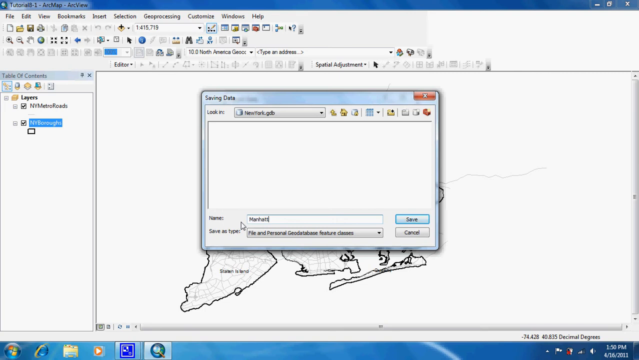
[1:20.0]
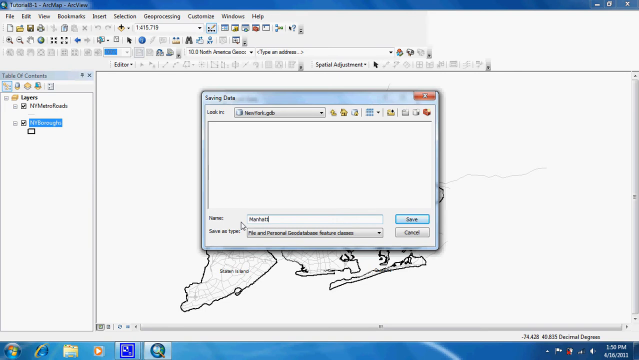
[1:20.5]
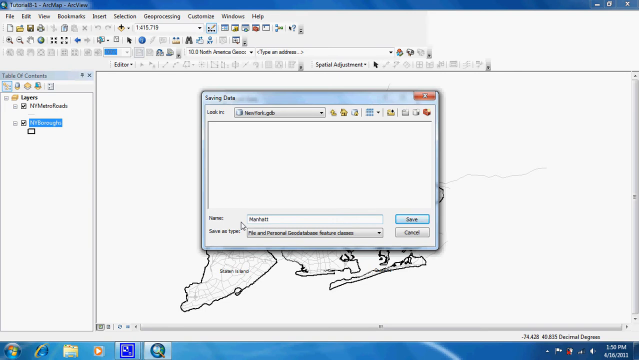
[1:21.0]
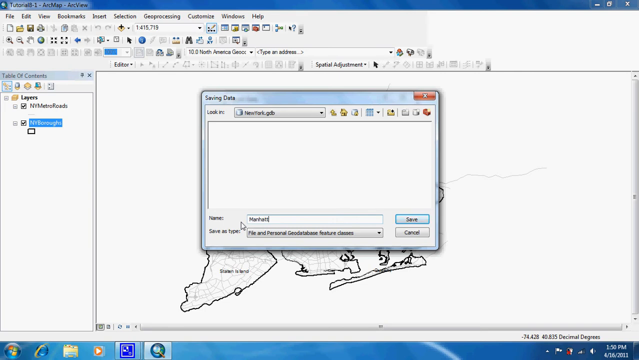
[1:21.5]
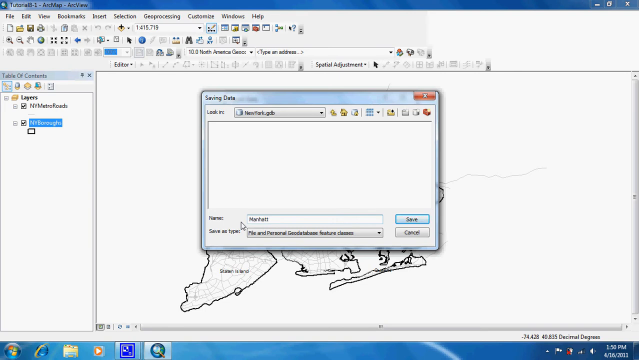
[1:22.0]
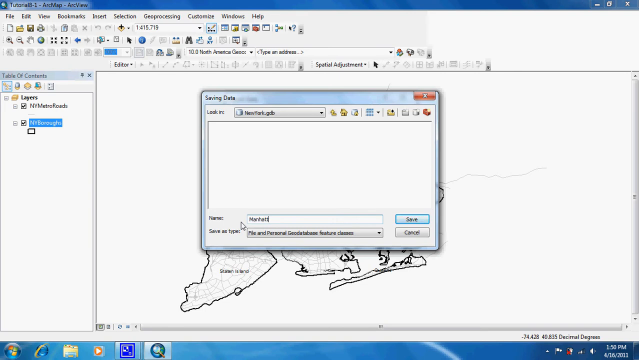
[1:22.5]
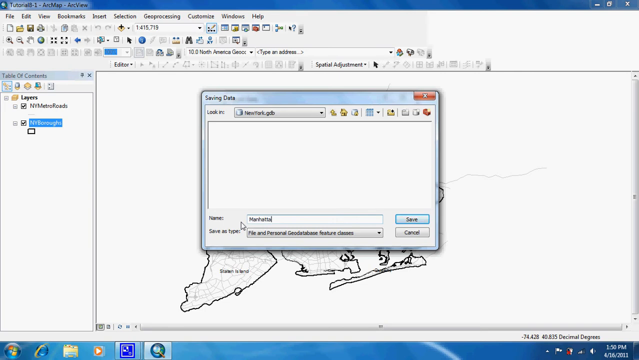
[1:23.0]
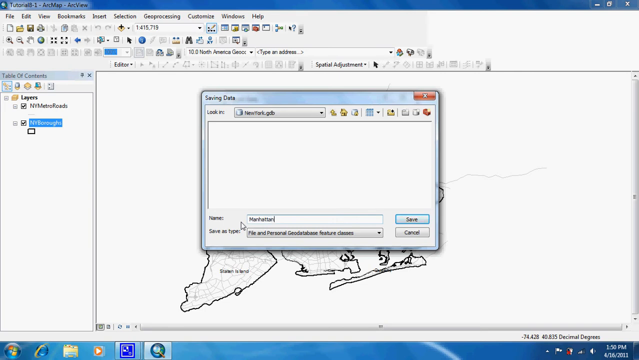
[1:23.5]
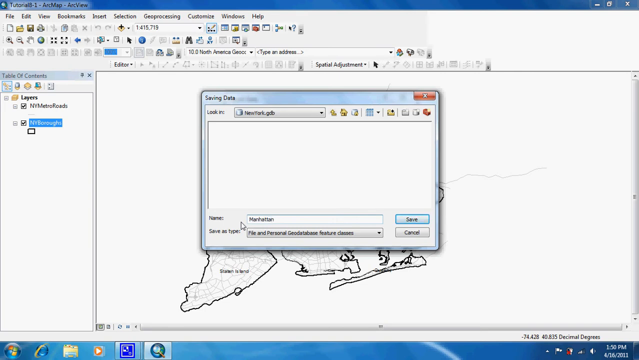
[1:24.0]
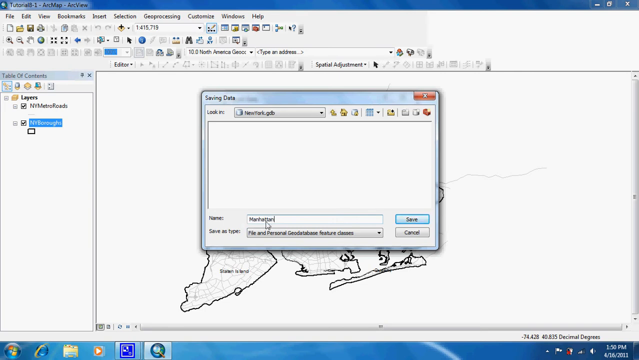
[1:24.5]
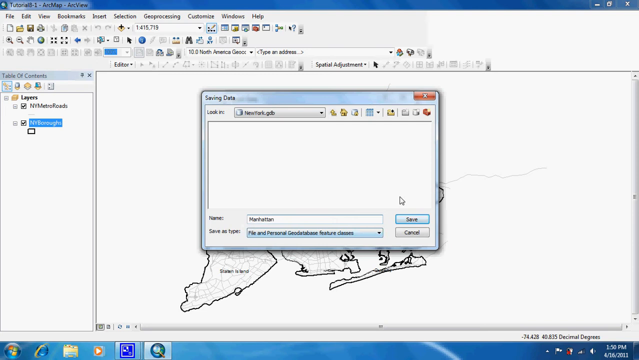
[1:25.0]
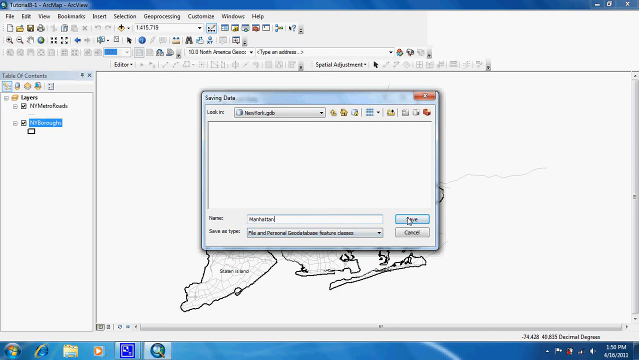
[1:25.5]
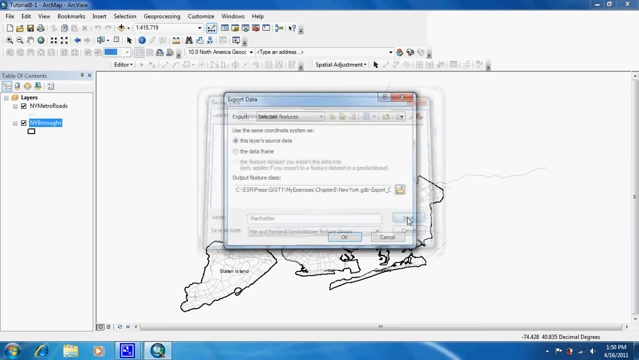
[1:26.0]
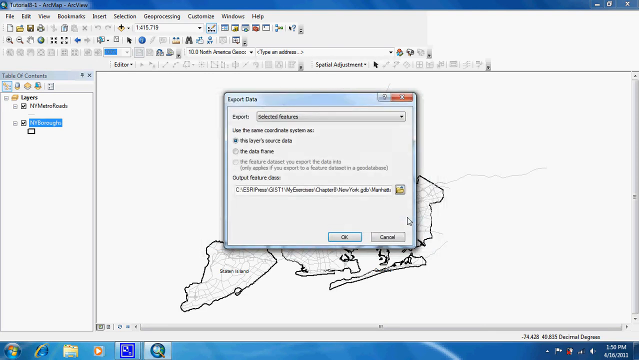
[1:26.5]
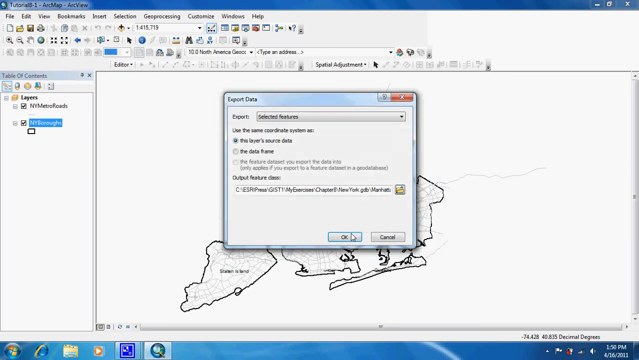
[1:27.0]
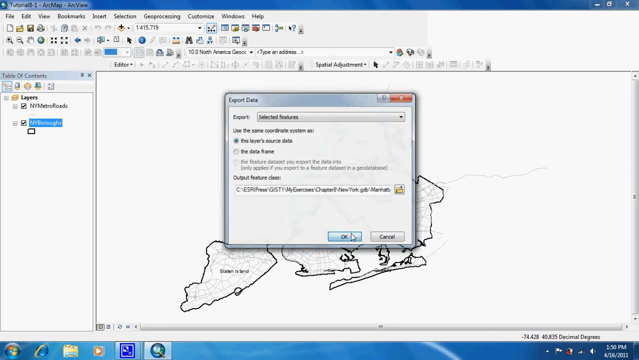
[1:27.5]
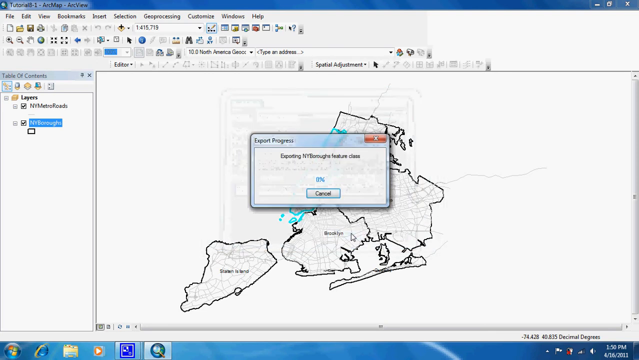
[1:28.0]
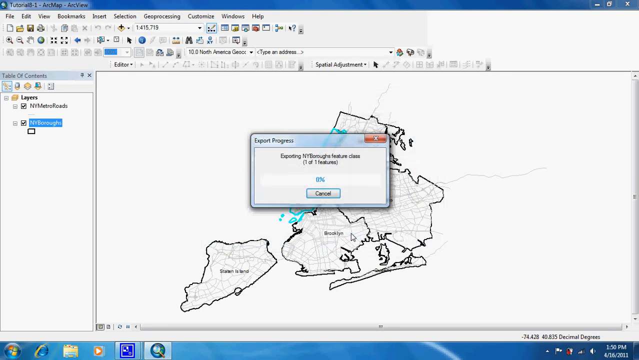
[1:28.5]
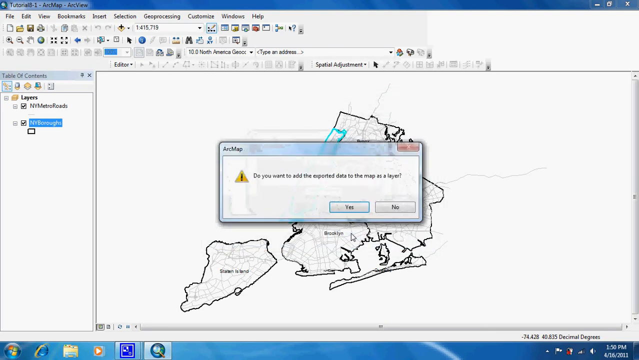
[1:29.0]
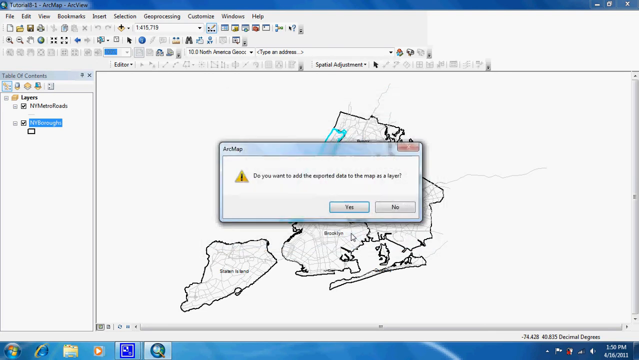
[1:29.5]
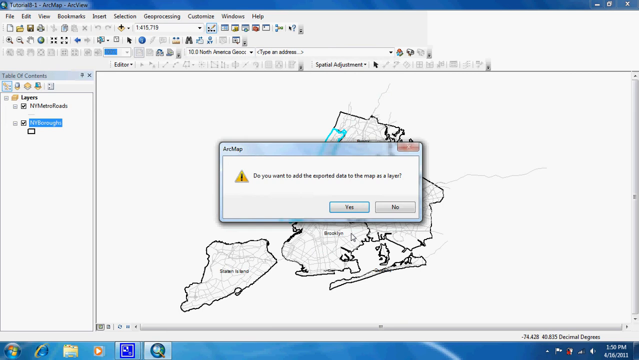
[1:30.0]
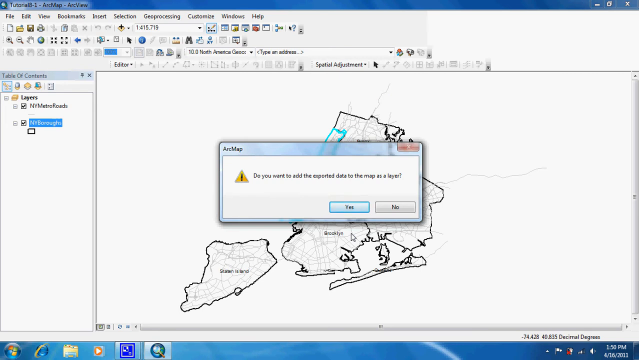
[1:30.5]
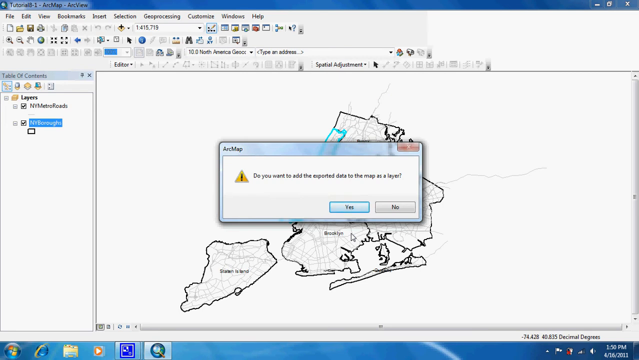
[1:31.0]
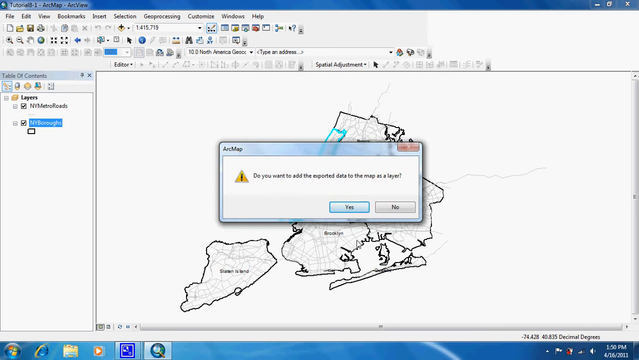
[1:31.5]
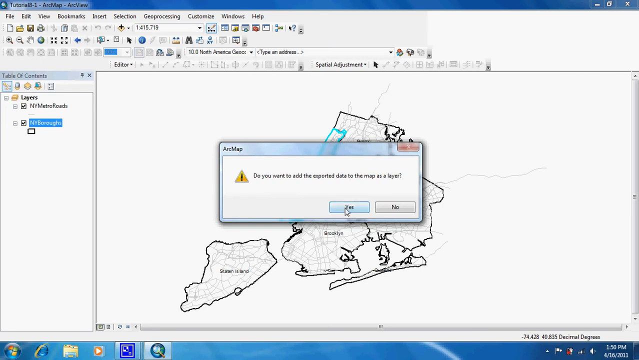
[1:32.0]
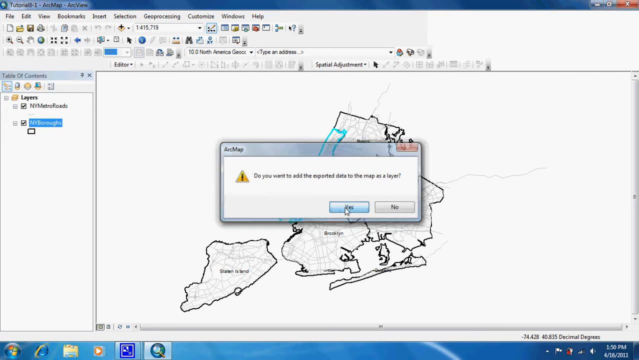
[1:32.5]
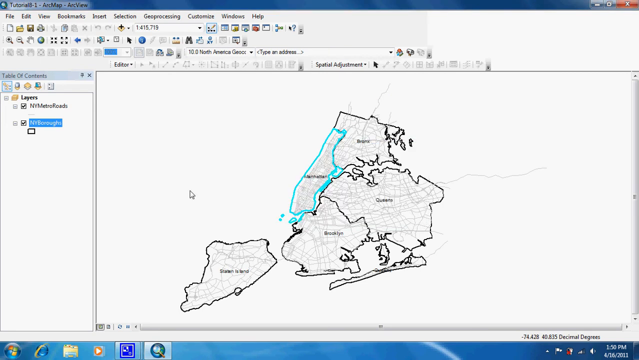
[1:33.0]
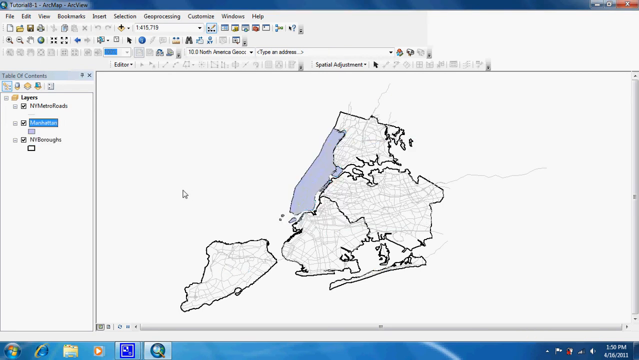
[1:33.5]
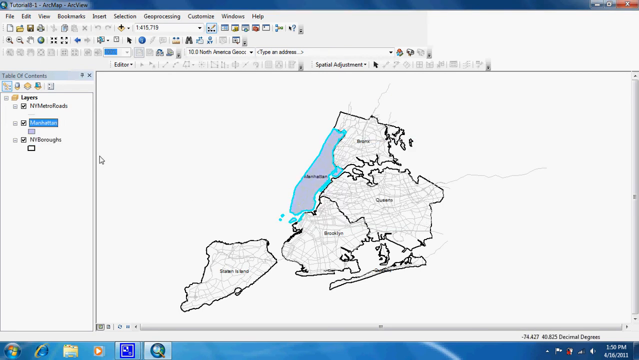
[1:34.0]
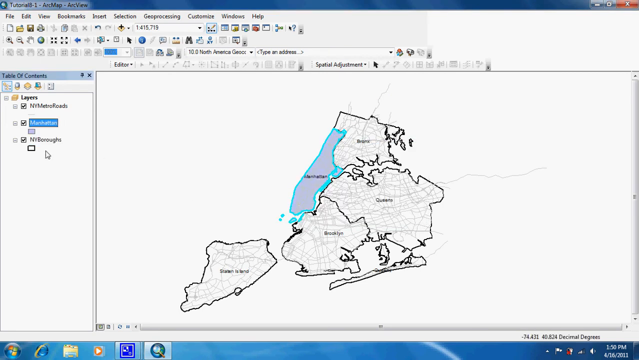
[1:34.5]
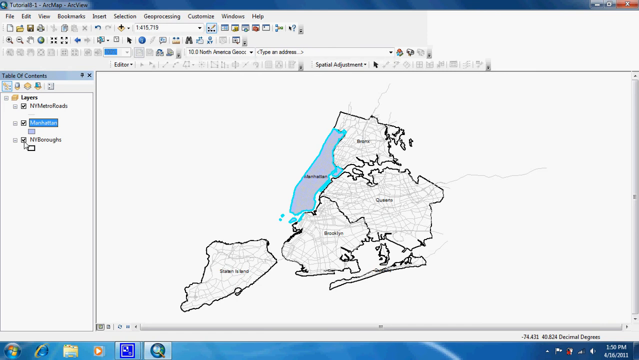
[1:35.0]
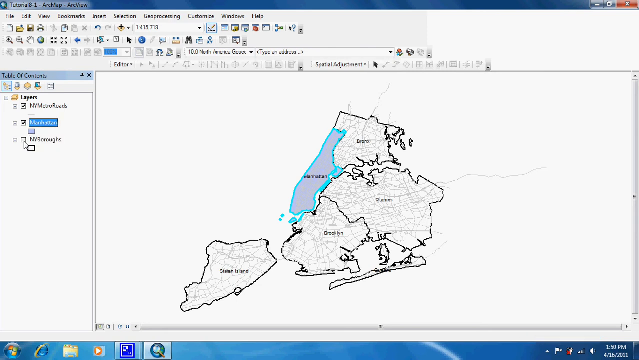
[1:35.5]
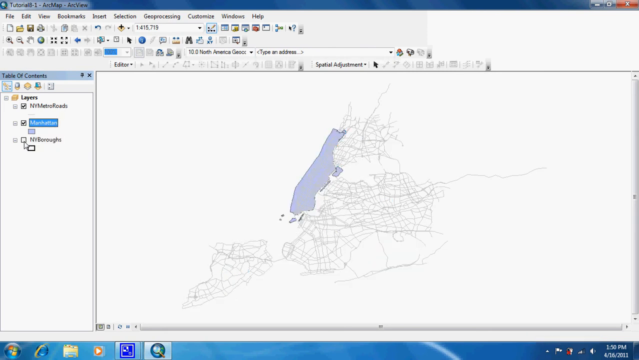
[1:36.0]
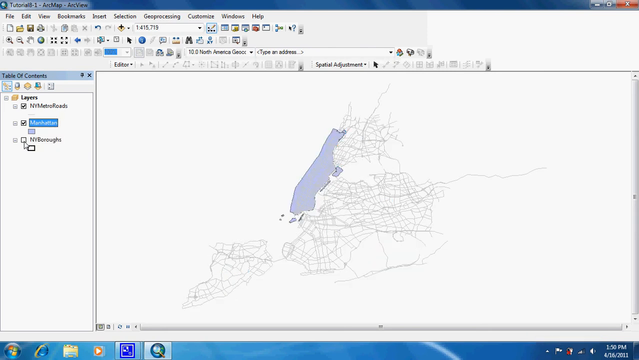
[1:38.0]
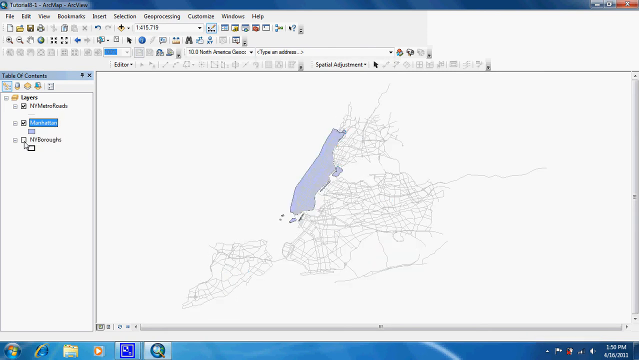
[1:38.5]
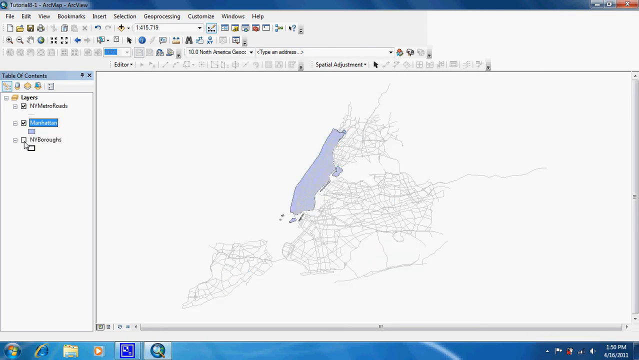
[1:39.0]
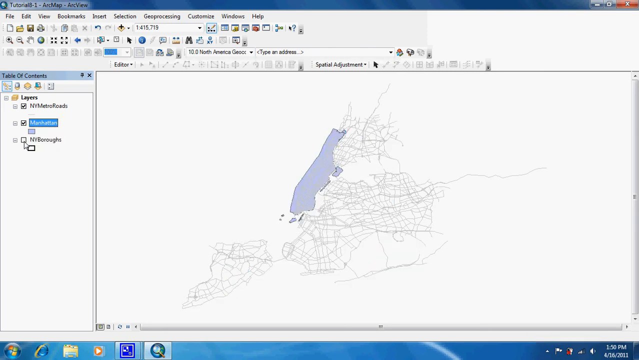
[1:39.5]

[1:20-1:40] The saving data window is open, looking in the newyork.gdb directory. The file is named Manhattan and the save button is clicked, returning to the export data window still open in the background. OK is clicked and the data exports. A pop-up asks "do you want to add the exported data to the map as a layer", and yes is selected. The map changes slightly: the teal highlight remains, but the Manhattan area itself has turned a purple-like color. At one point the view zooms out a little; the map looks slightly different, almost as if zoomed out, and the roads and lines within the map are no longer visible.